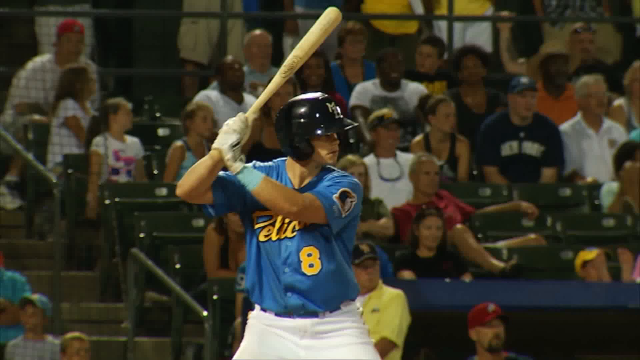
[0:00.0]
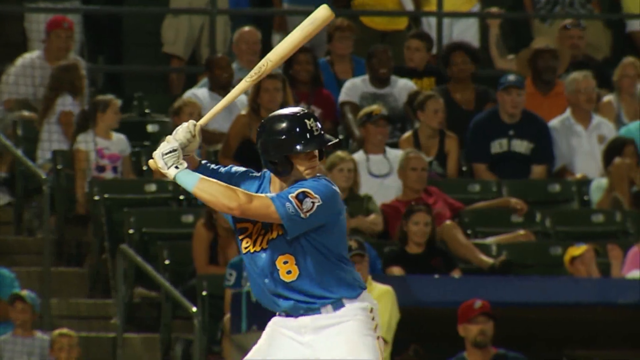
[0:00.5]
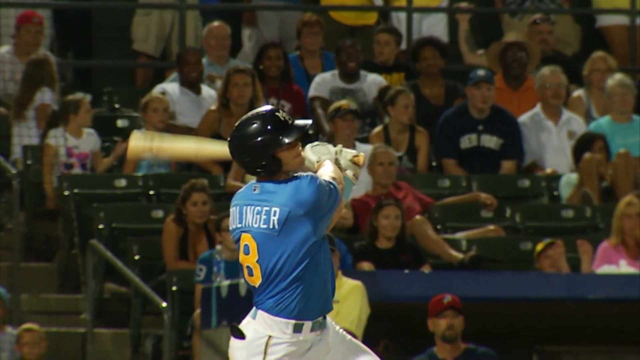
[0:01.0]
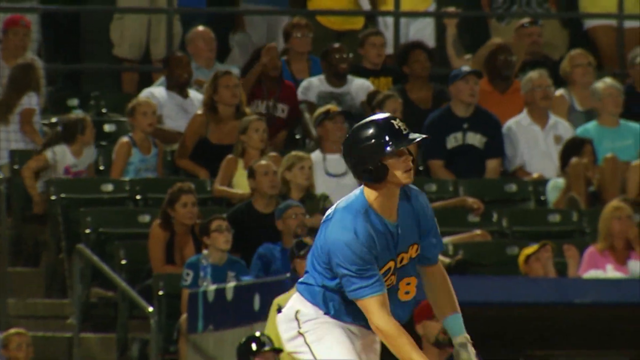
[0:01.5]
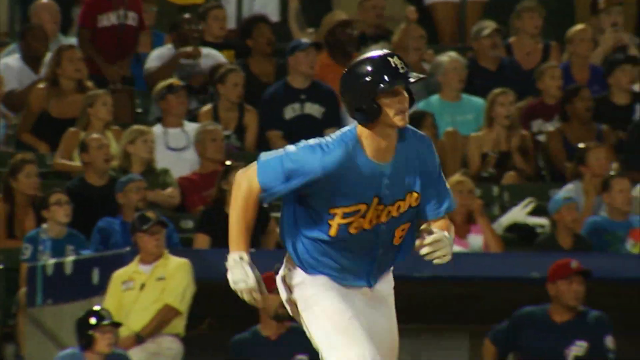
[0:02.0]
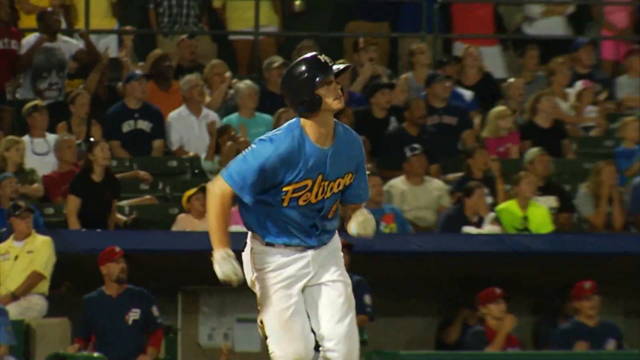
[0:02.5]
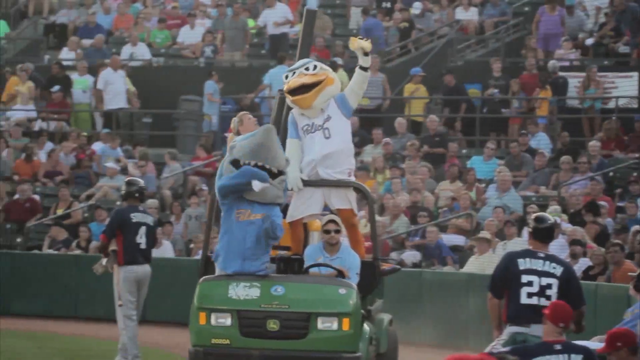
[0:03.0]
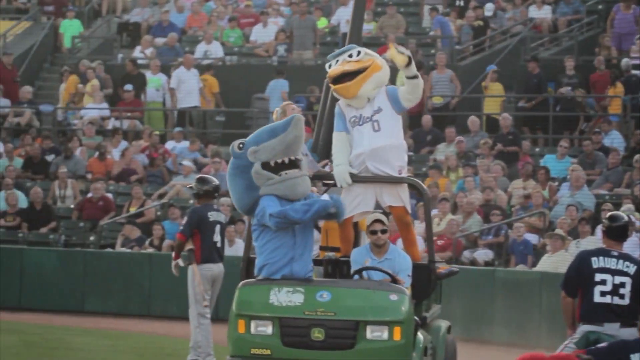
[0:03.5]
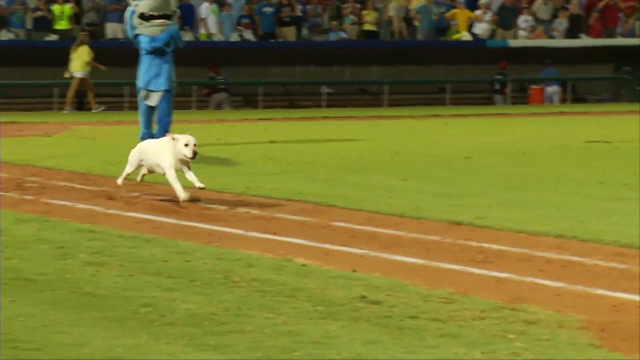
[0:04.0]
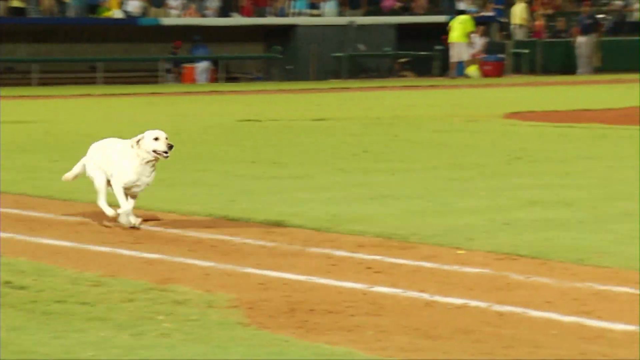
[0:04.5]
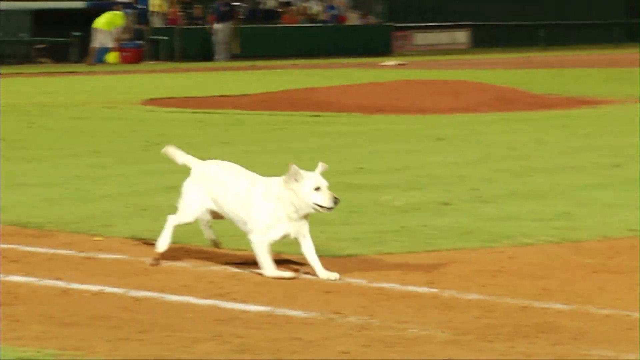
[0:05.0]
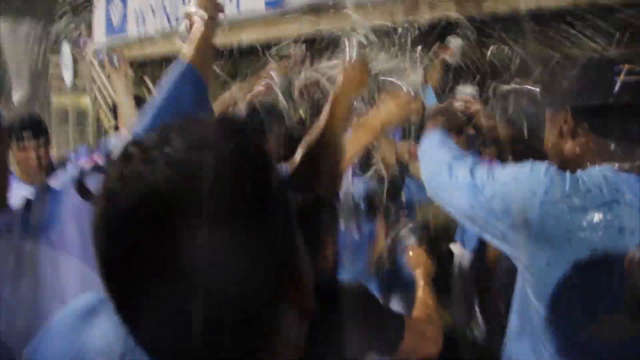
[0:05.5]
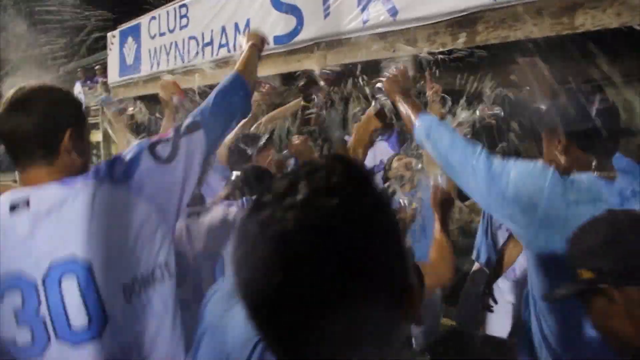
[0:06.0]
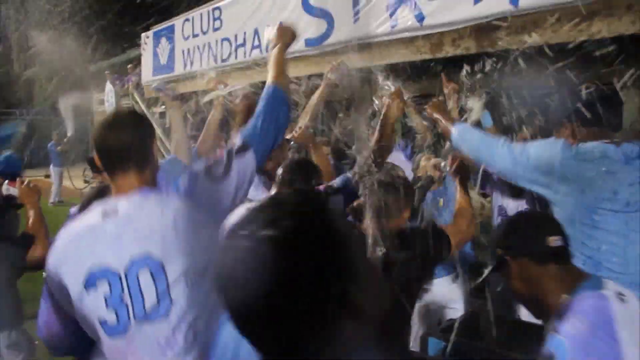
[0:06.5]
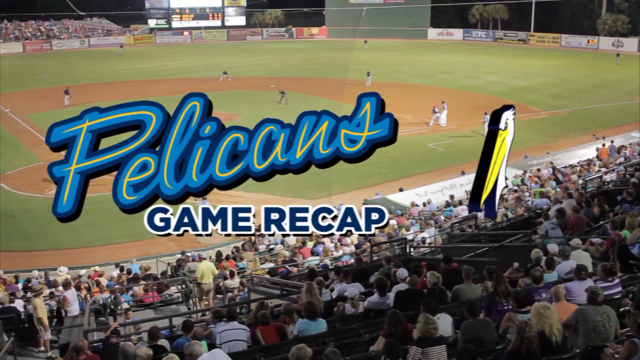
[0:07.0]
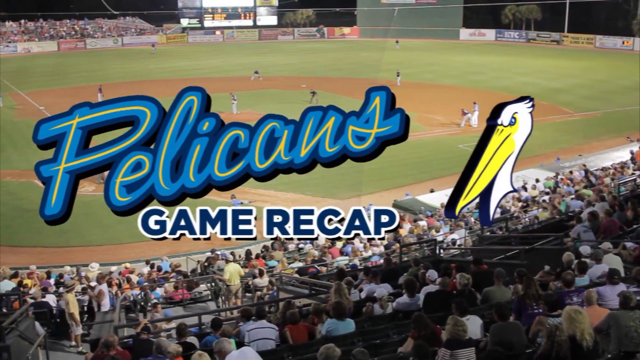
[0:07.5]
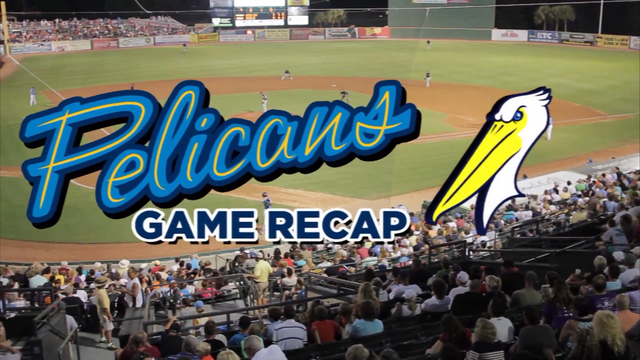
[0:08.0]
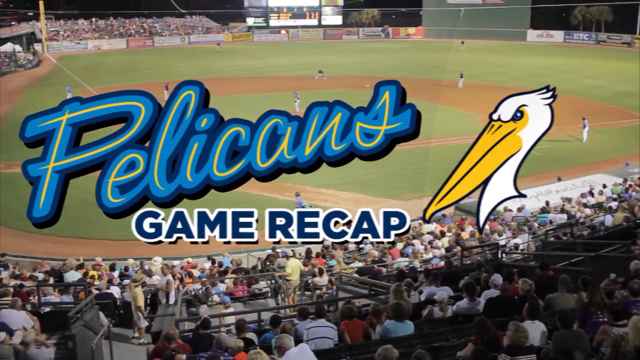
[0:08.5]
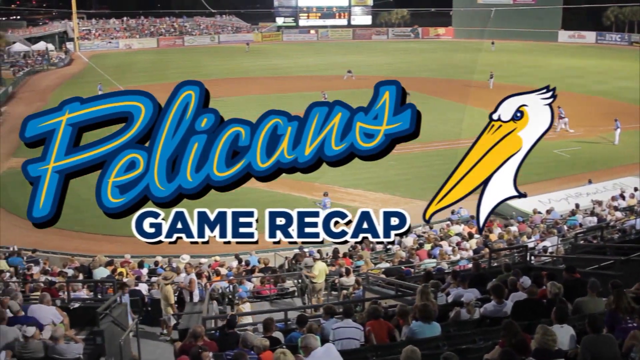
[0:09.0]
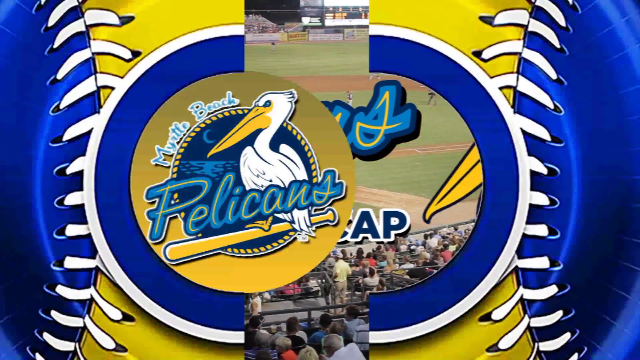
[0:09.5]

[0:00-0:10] A baseball game is shown. The players appear young, possibly teenagers or even younger. Two mascots appear, one a shark and the other looking like a duck, followed by a real dog. Different short shots follow, and on-screen text reads "Pelicans Game Recap." The stadium is small, and the team's colors are blue and yellow. A player wearing number eight is about to swing, gripping the bat with his right hand at the top and his left hand at the bottom.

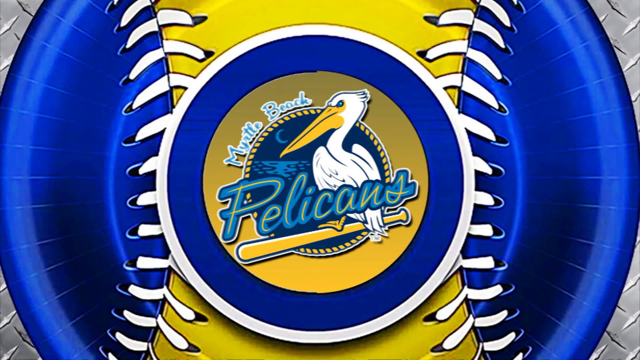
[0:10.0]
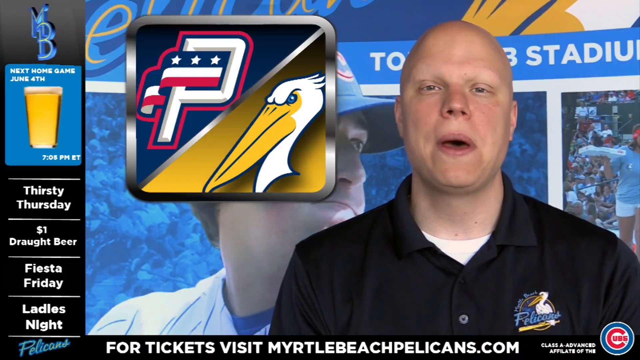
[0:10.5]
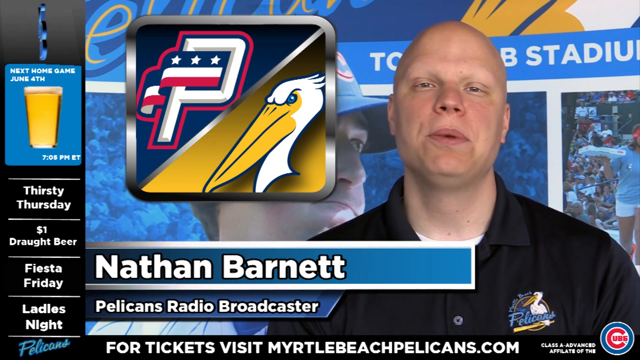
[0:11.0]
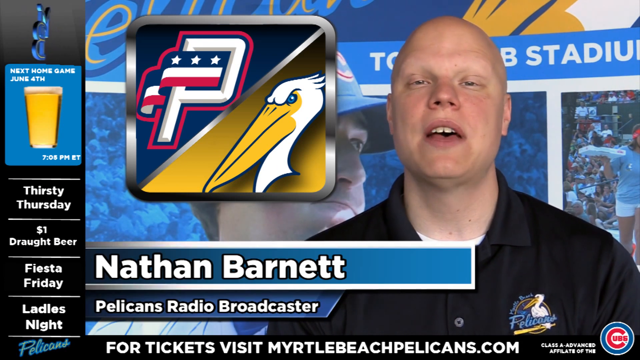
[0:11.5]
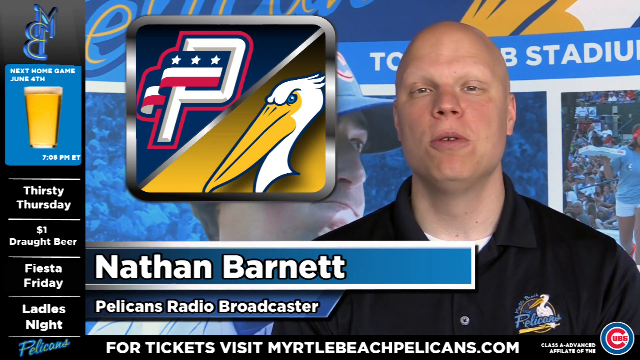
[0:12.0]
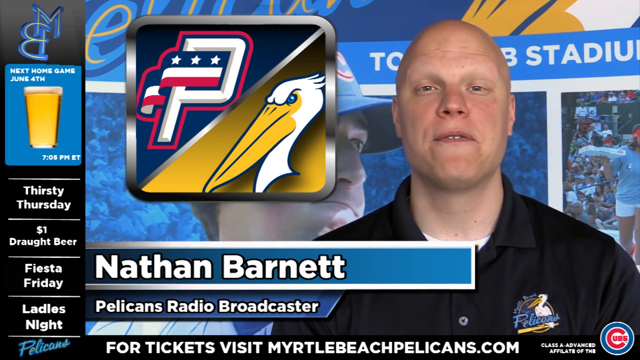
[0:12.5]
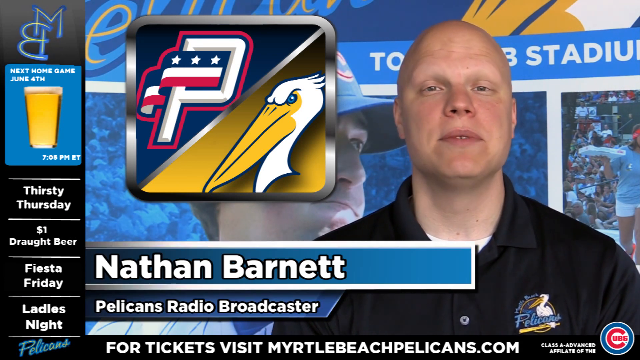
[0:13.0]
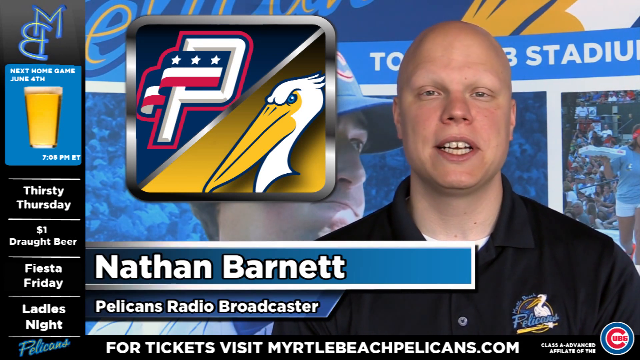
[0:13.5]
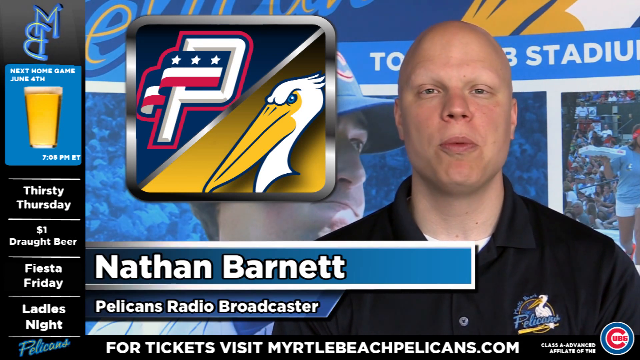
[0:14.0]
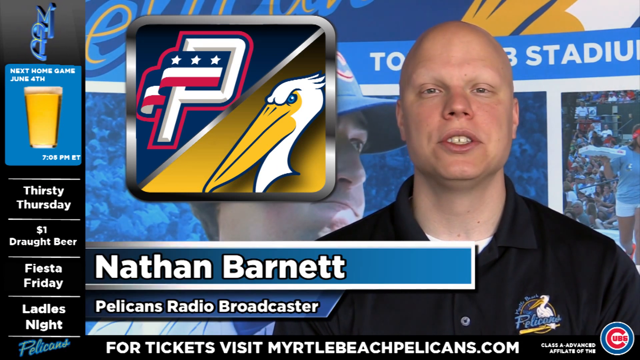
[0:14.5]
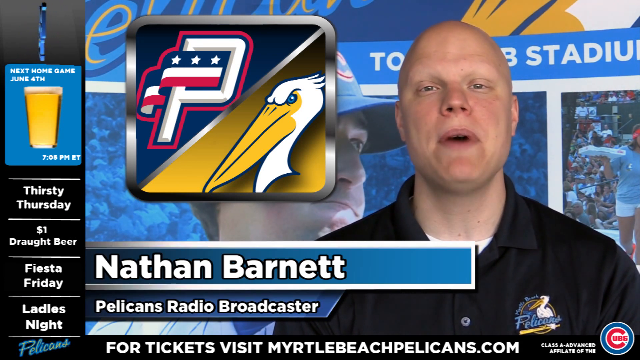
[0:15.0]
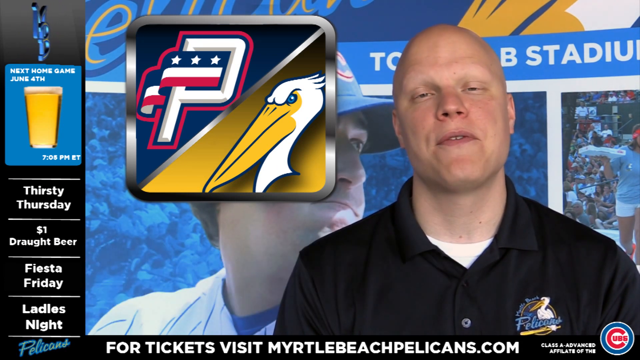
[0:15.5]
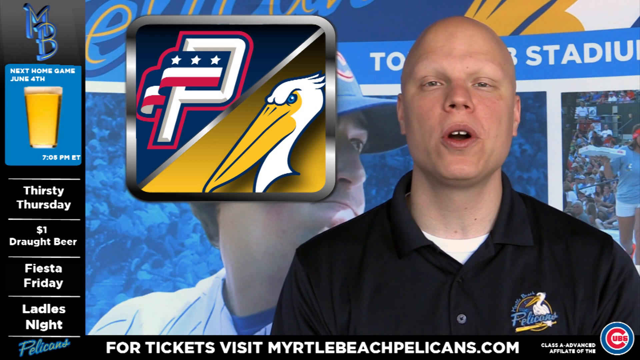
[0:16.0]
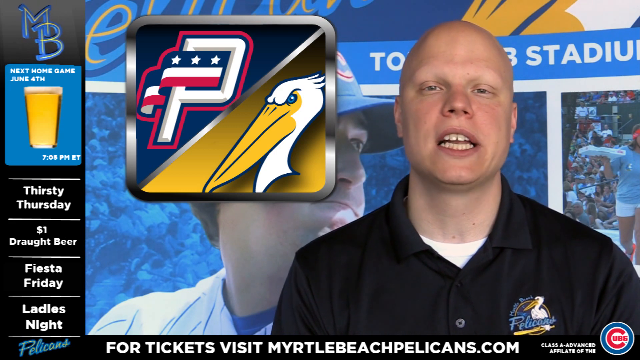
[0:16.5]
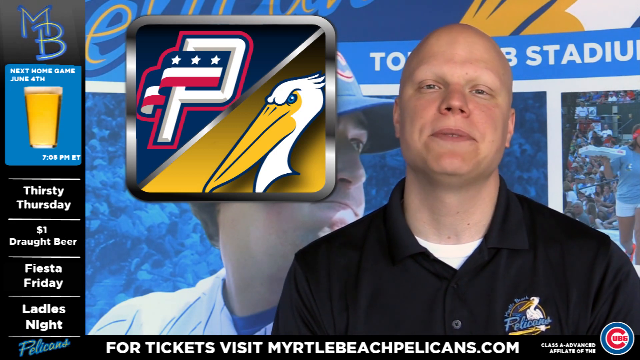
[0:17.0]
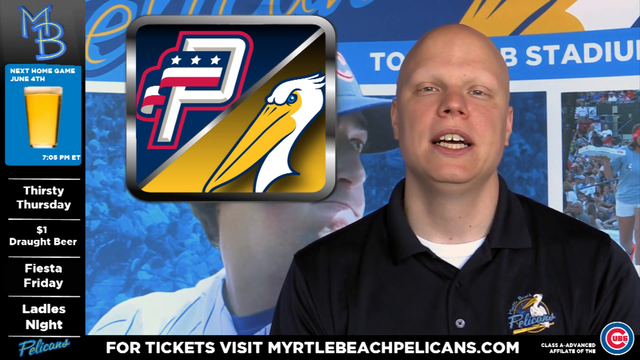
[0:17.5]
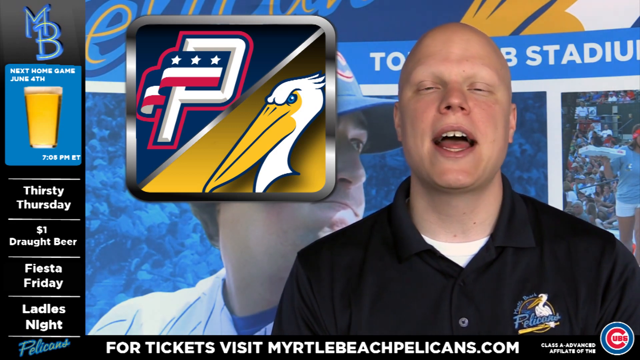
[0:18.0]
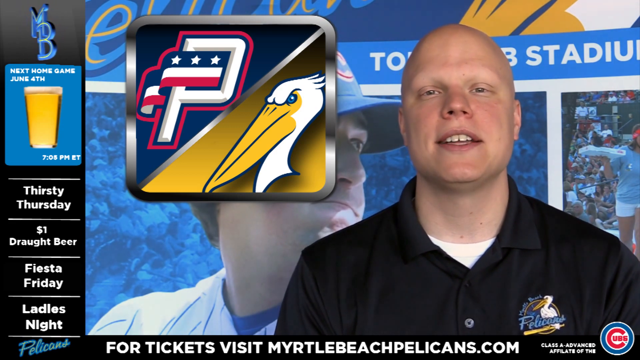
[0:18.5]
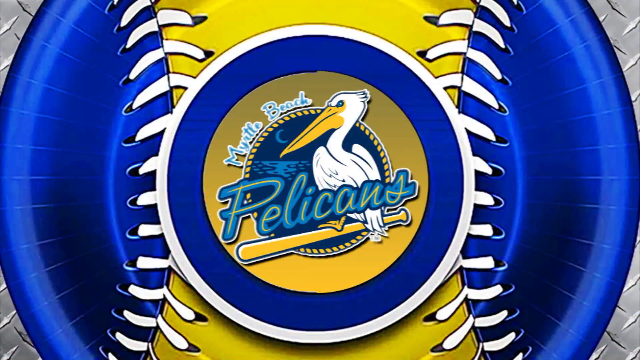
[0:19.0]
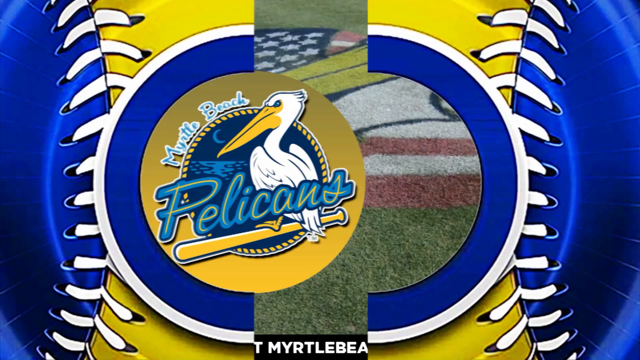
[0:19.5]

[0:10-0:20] The video focuses on the Pelicans. A baseball graphic appears, blue on the outside with regular white stitching and yellow, and it reads "Myrtle Beach." A white pelican with blue eyes and a long beak is on a baseball bat in the middle of the graphic, which then disappears. A man named Nathan Barnett appears, with "Pelicans Radio Broadcaster" underneath his name. The stadium is in the background as he faces the camera and talks, wearing what appears to be a collared polo shirt with black buttons. The pelican mascot appears on the right side of the frame. Text reads "Thirsty Thursdays," "Fiesta Friday" and "for tickets visit myrtlebeachpelicans.com."